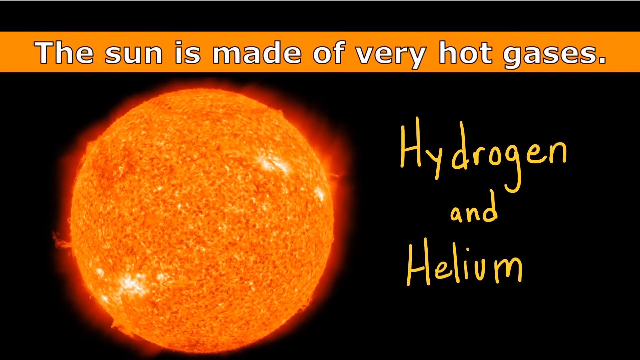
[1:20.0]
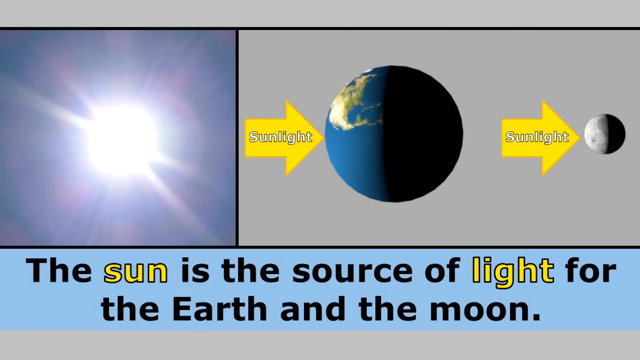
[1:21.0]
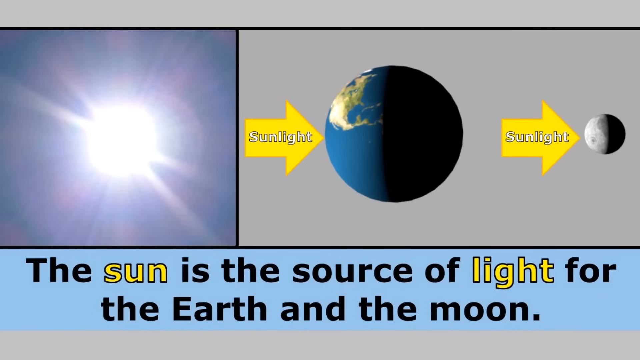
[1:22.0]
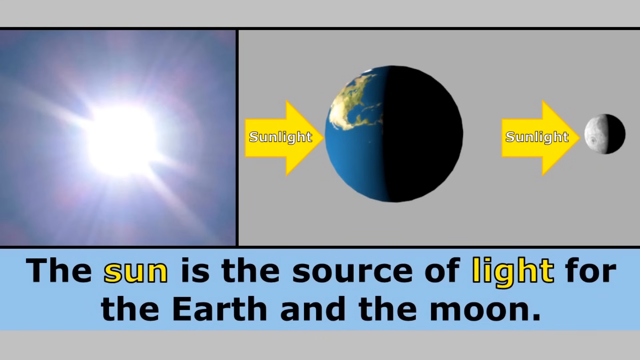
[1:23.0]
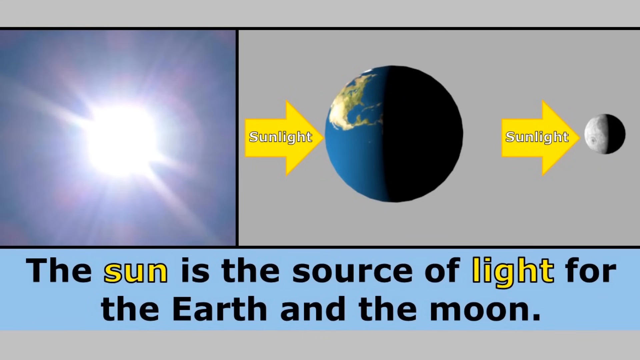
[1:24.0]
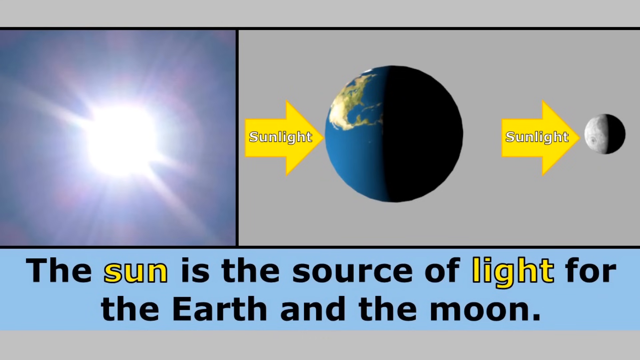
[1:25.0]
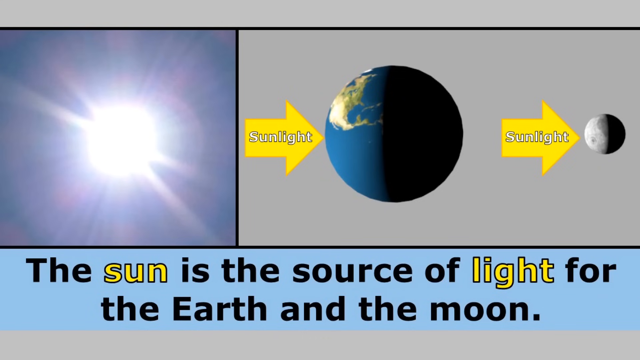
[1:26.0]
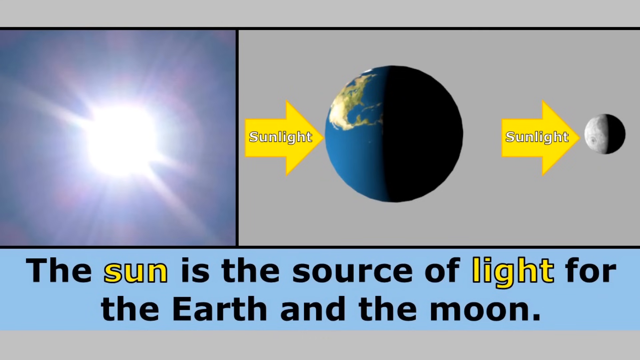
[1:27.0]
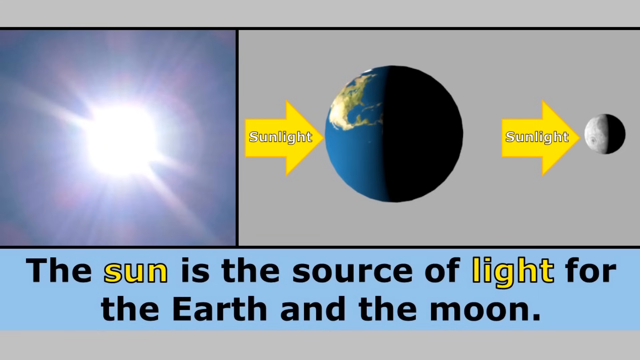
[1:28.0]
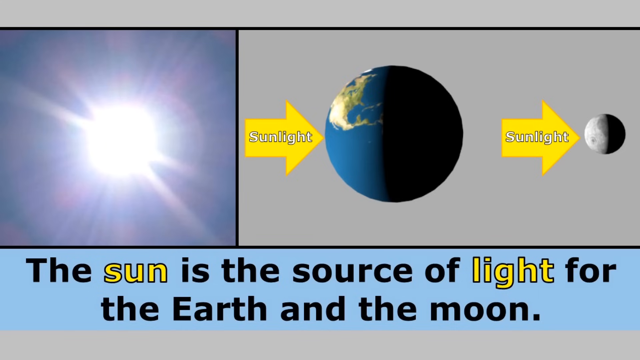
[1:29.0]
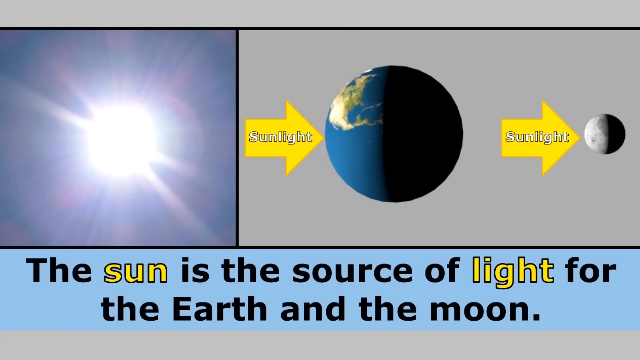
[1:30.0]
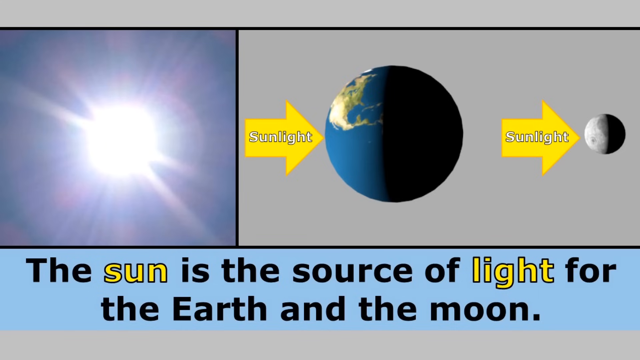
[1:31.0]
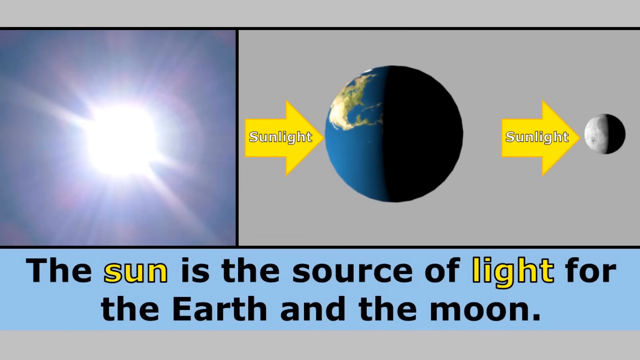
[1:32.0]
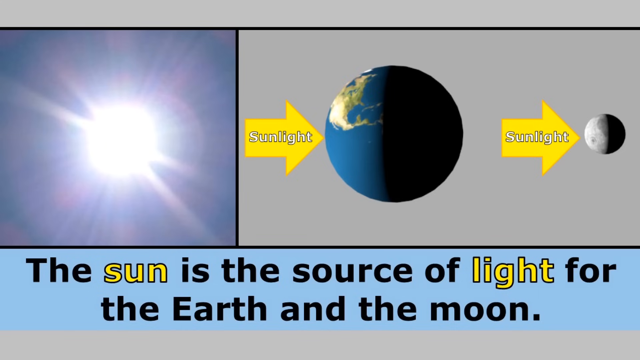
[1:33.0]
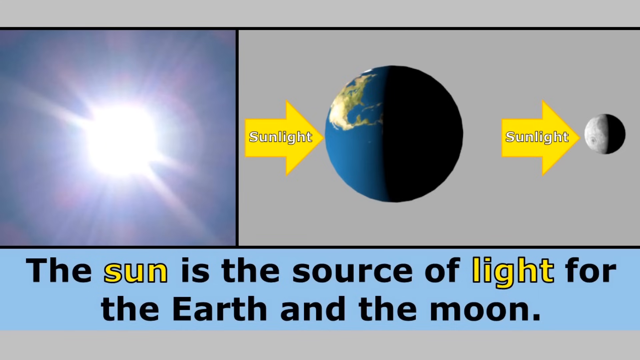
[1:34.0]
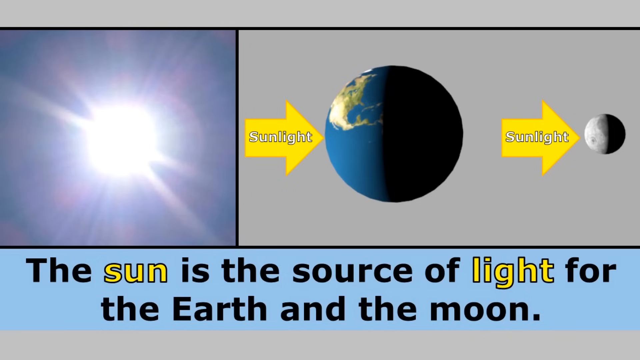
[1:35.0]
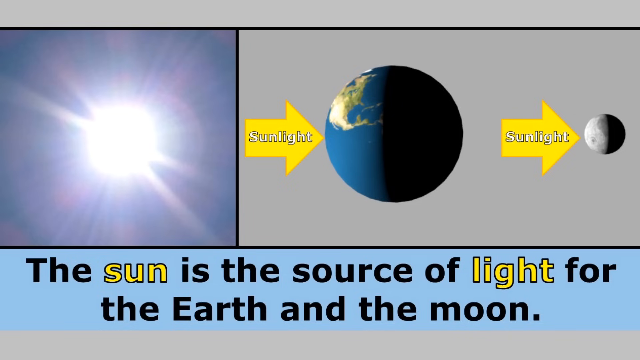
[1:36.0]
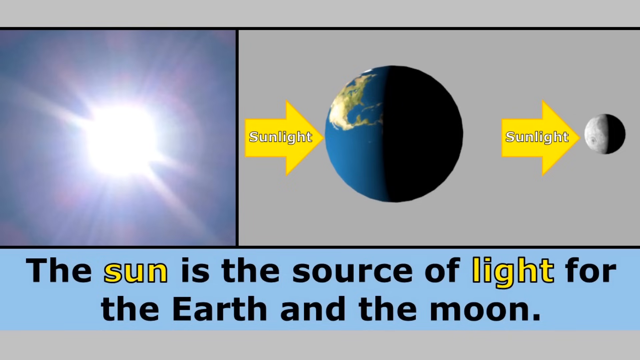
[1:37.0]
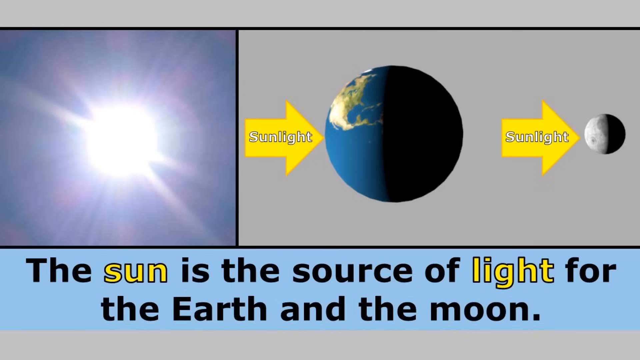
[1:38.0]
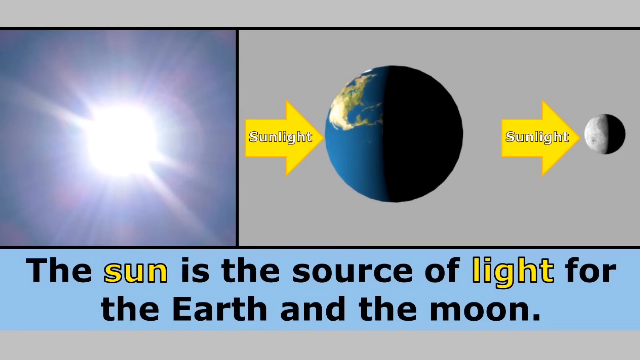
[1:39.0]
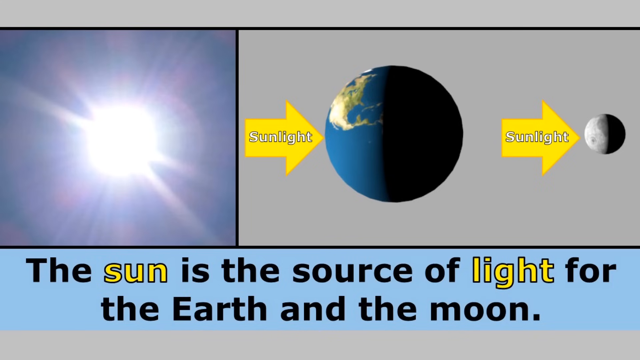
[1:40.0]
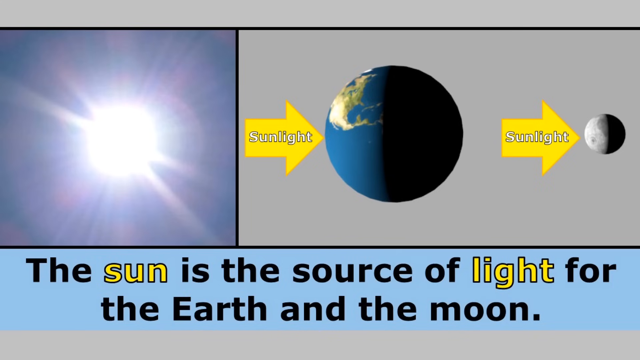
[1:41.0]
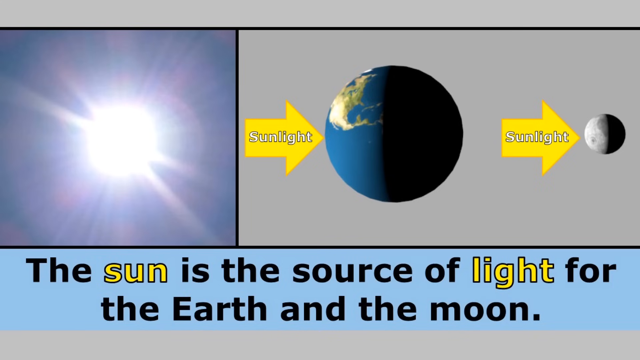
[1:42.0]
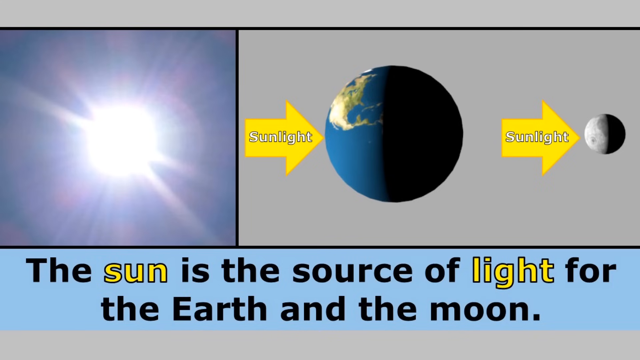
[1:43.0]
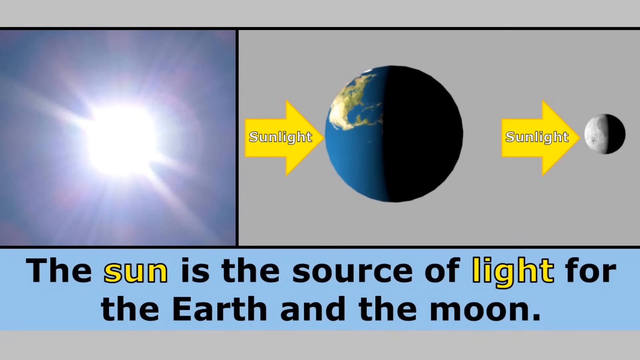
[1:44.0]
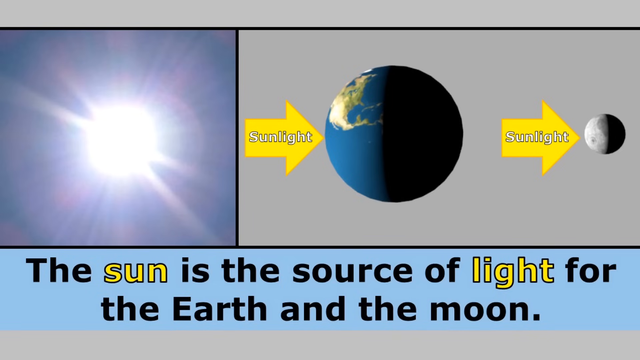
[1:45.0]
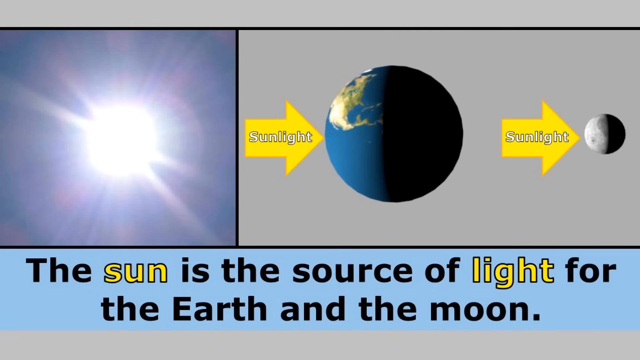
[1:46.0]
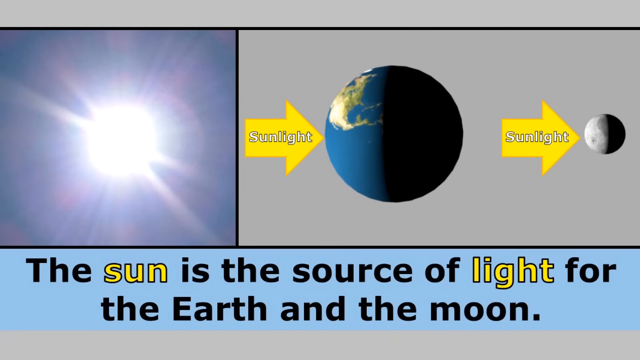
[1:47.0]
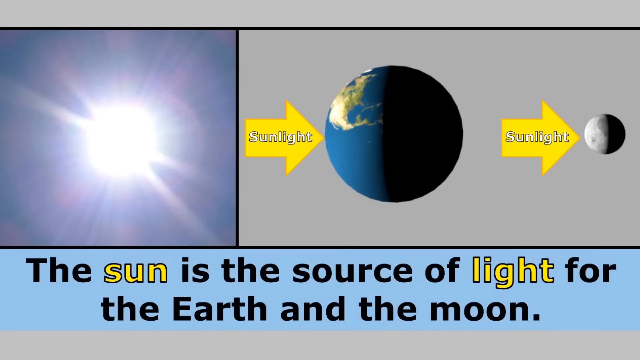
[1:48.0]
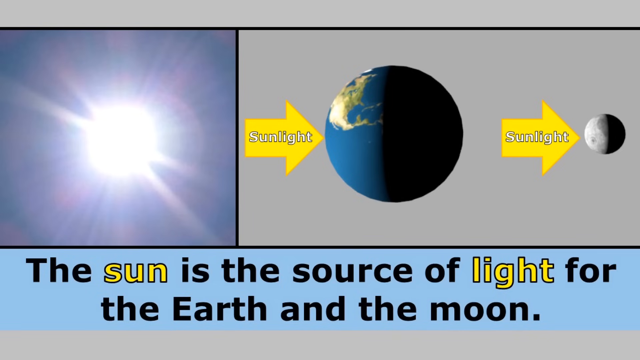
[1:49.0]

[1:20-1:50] The same sun on the black background continues, now with writing on the right reading "hydrogen and helium" in yellow, MS Paint-style text that looks drawn on rather than typed. Another image follows: on the left is a sun that looks like the actual sun, as if a camera were pointed at it, rather than an orange model. An arrow goes right, showing it shining light onto the earth's surface on the left side, and another arrow on the right points toward the moon. Text at the bottom reads "the sun is the source of light for the earth and the moon" on a horizontal background of a sort of ice blue color.